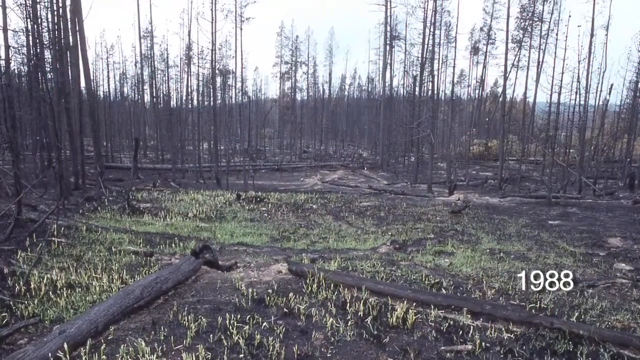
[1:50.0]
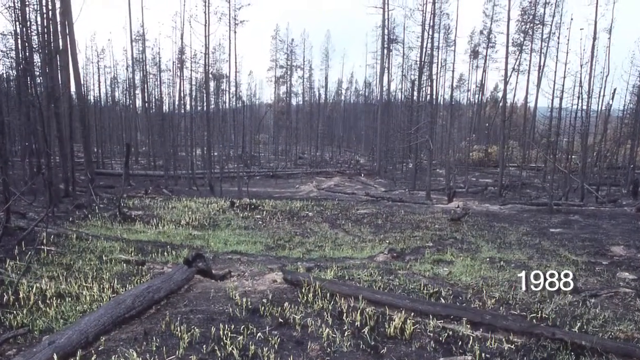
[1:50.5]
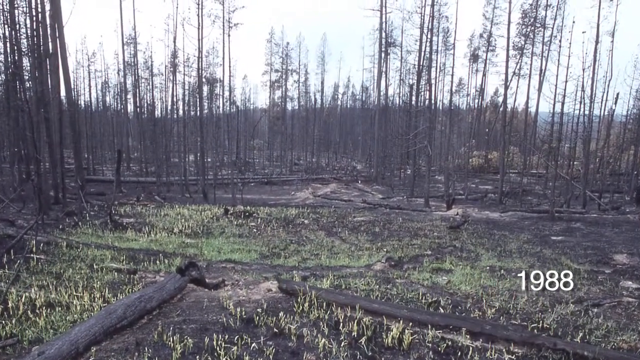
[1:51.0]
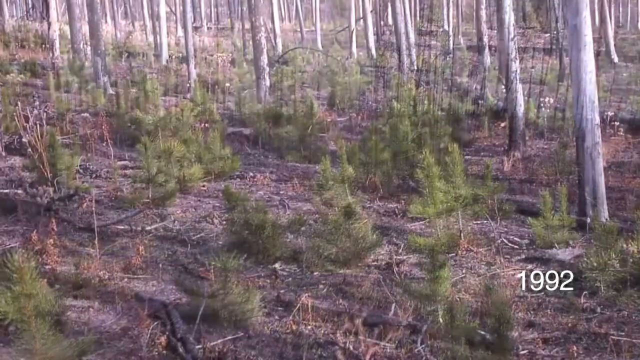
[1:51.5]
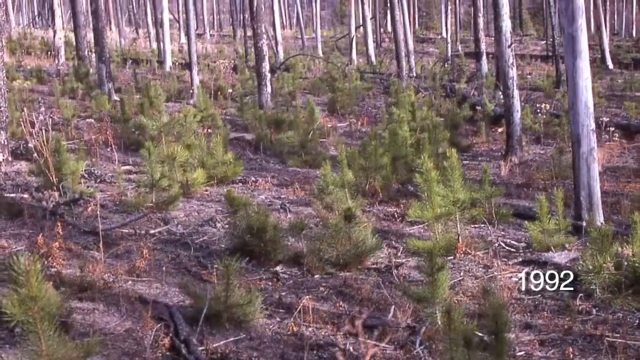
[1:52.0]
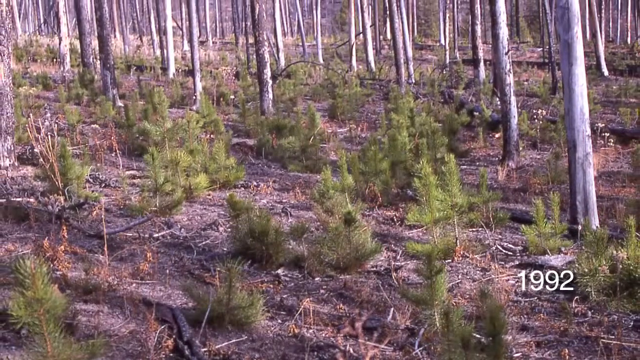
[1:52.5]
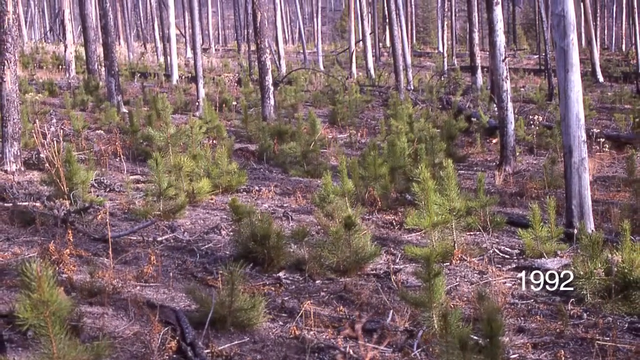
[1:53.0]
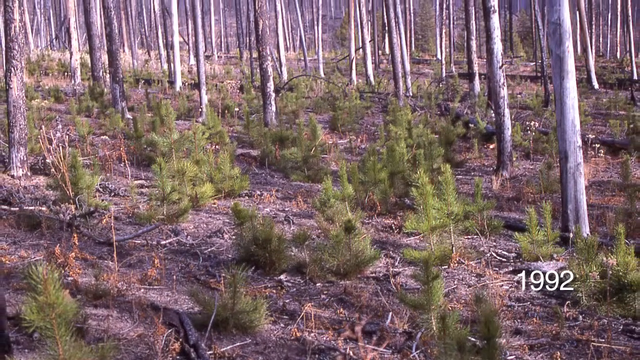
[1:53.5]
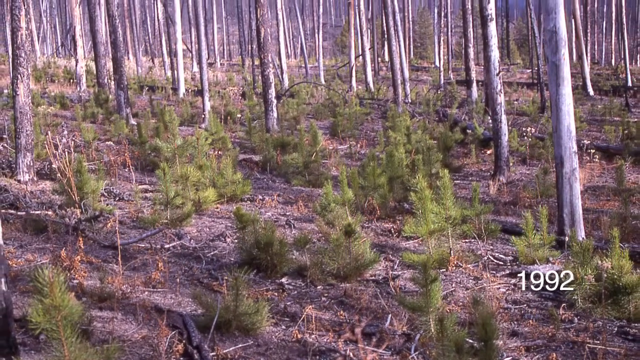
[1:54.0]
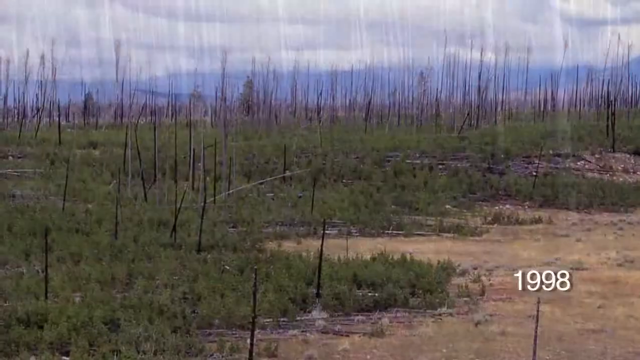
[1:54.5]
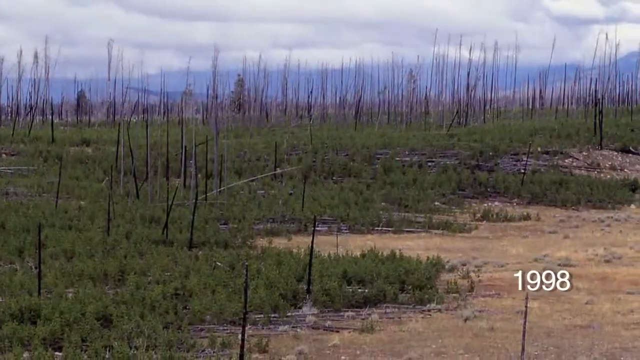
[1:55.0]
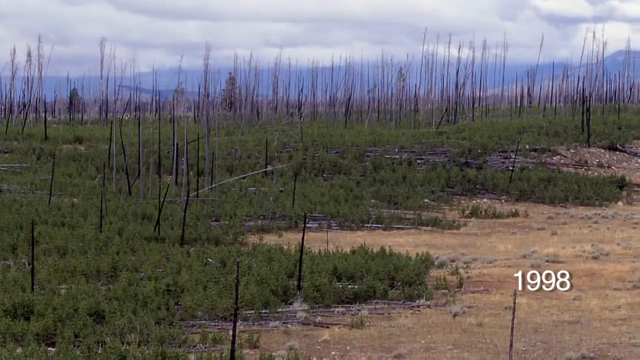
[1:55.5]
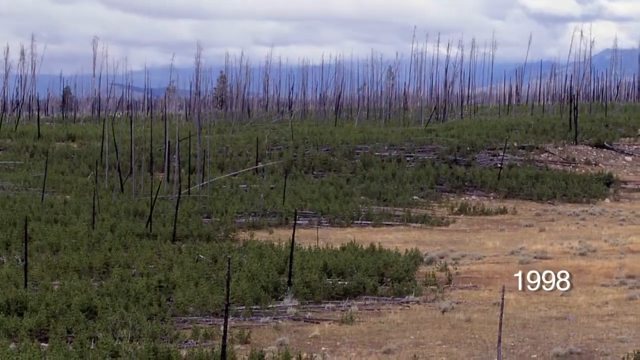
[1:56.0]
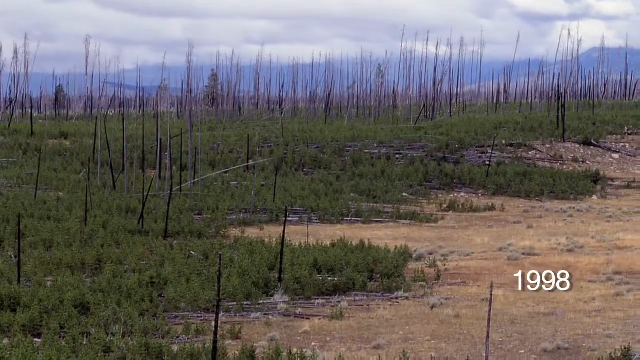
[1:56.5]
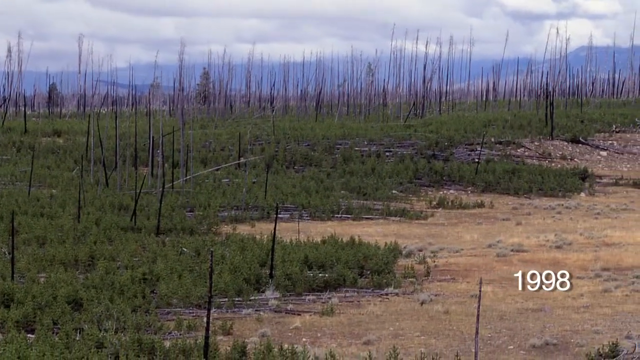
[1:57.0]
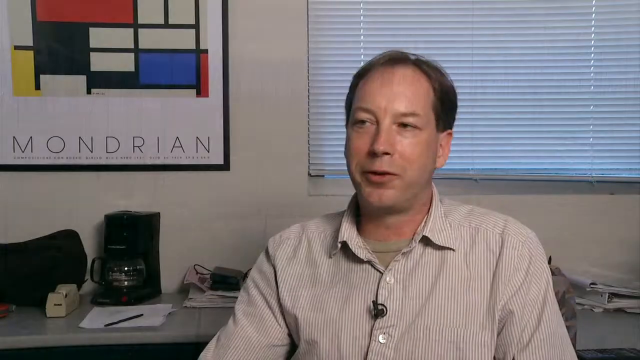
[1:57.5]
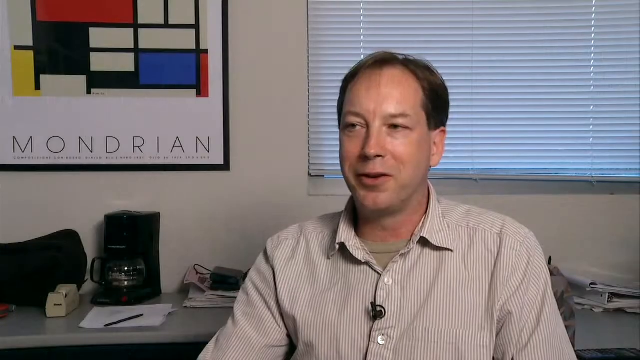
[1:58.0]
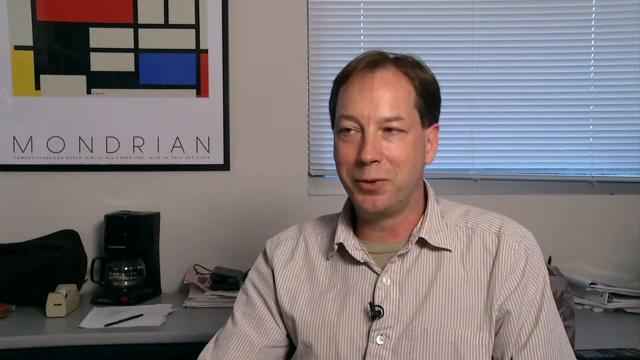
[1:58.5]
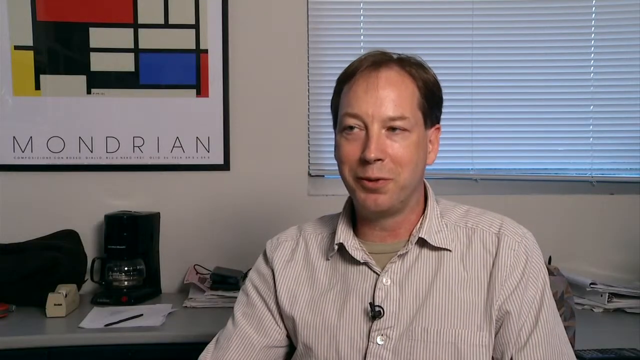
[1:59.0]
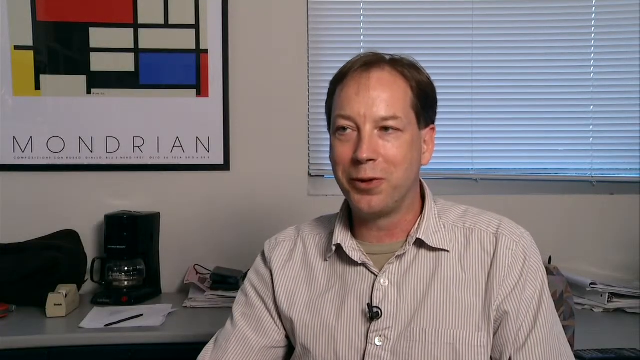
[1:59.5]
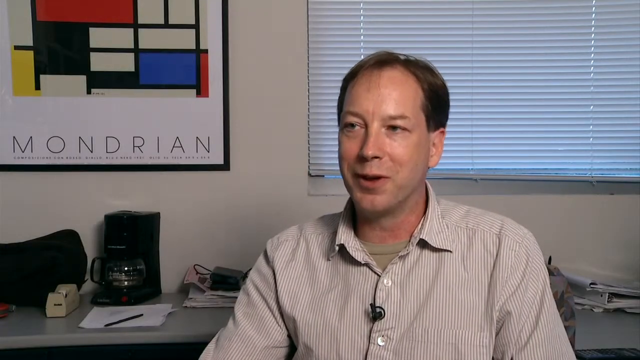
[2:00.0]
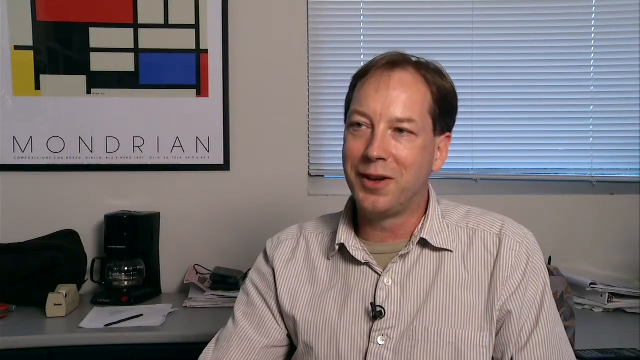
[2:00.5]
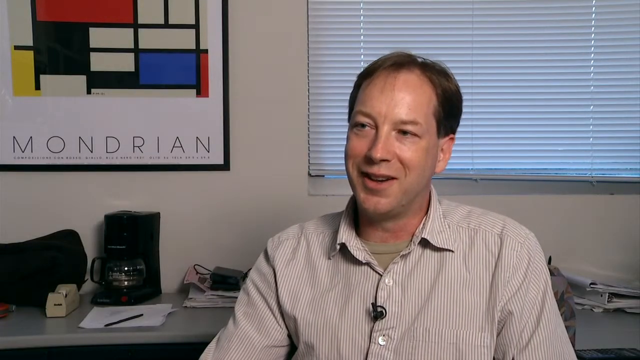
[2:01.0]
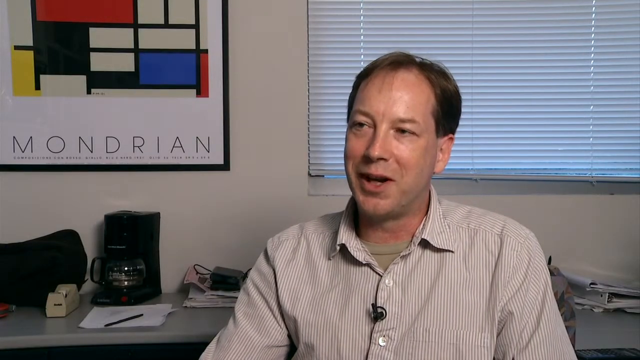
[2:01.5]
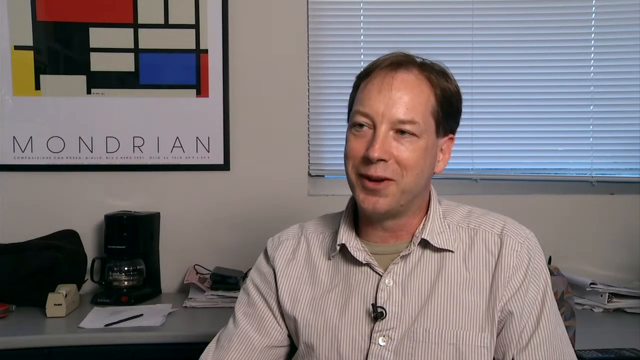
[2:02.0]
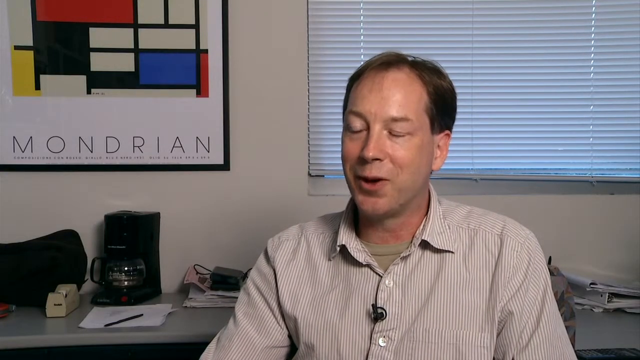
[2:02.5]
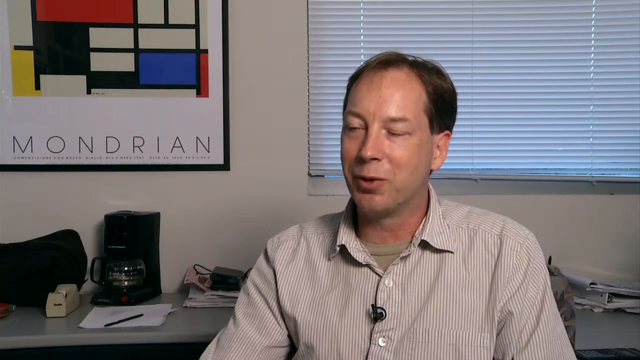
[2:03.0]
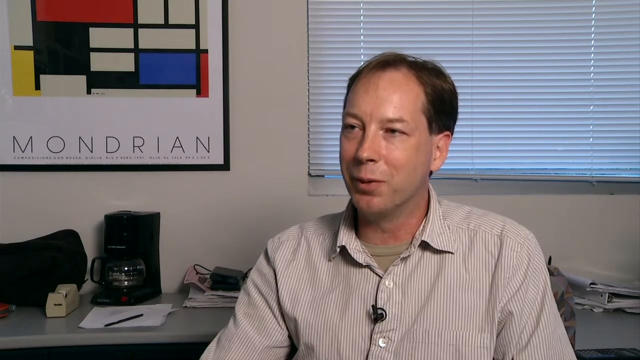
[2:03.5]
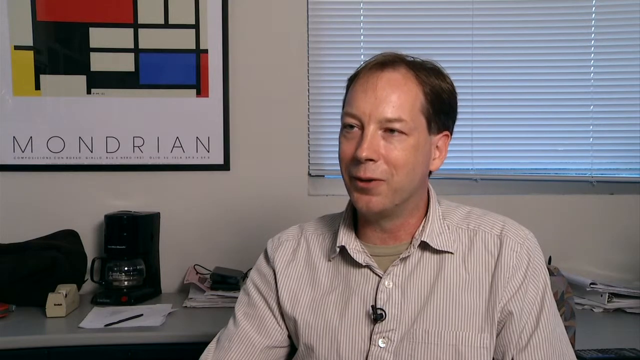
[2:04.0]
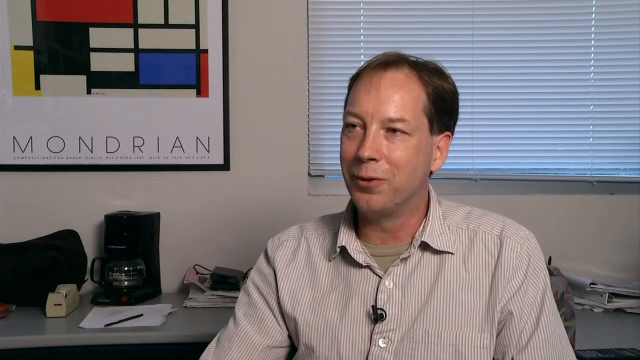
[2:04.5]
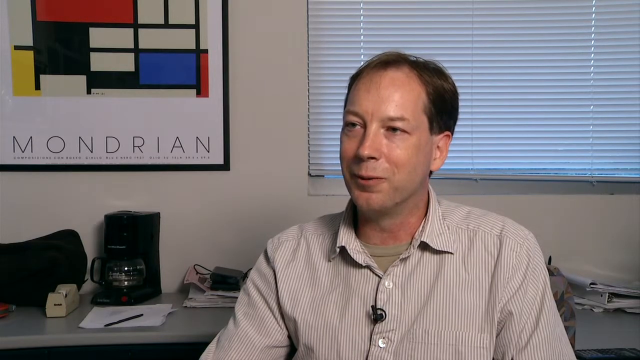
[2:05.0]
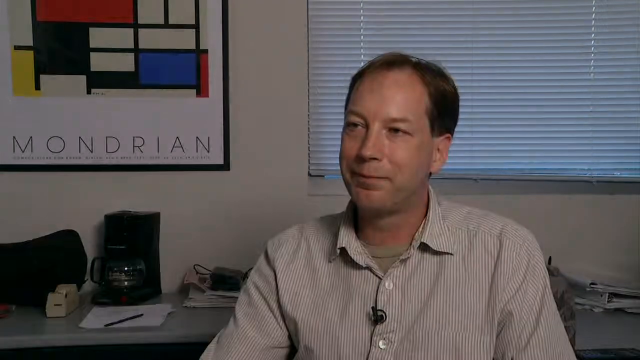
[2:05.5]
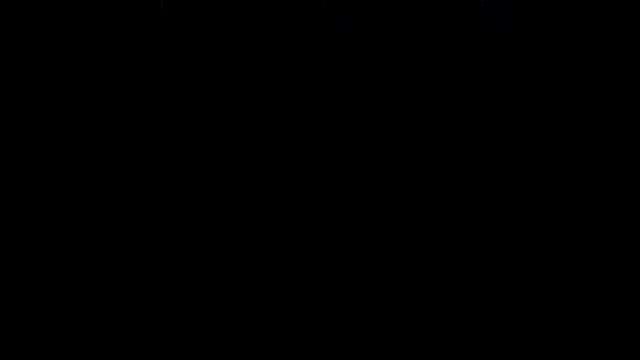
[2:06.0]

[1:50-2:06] A first-person view shows a forest that has just undergone a fire; it is pretty dried and barren, with very few leaves left. In the bottom right corner it says "1988". The camera zooms in, and then the date in the bottom right corner changes to "1992", showing trees starting to grow back. Then it says "1998", showing a lot of grass while the trees are still pretty barren. The scene shifts to a man in an office who smiles as he talks to an interviewer who is not visible. The man is balding and white and looks like he is in his late 40s. He wears a striped dress shirt with a microphone on it and seemingly a green undershirt underneath. On the wall is a picture that says "Mondrian" with an abstract image above the word. Under the picture is a table with a coffee maker, a coffee pot, a piece of paper, a pen, and a tape dispenser on the left side. The man continues to talk and smile, looking like he is having a good time, raising his eyebrows and nodding a bit as he answers questions.